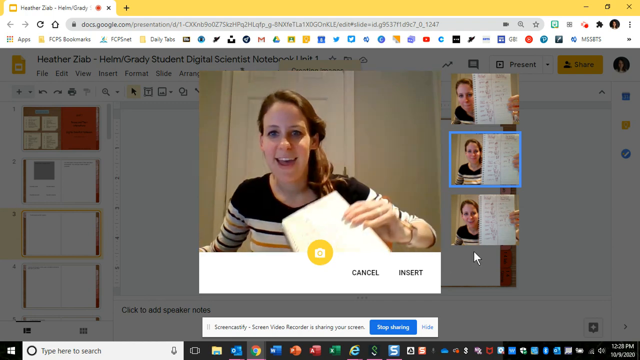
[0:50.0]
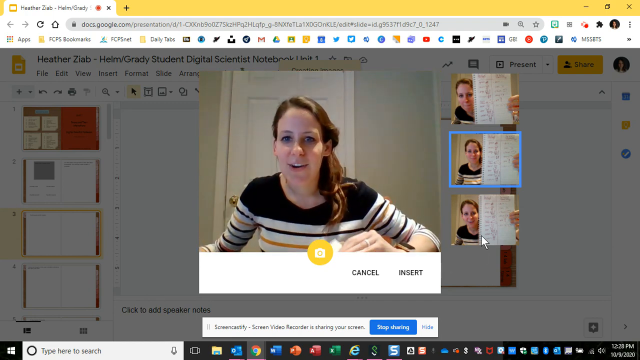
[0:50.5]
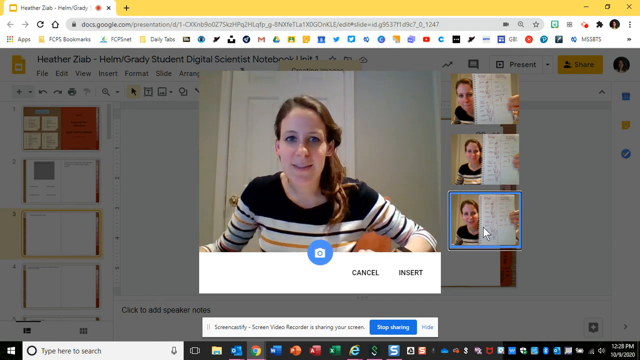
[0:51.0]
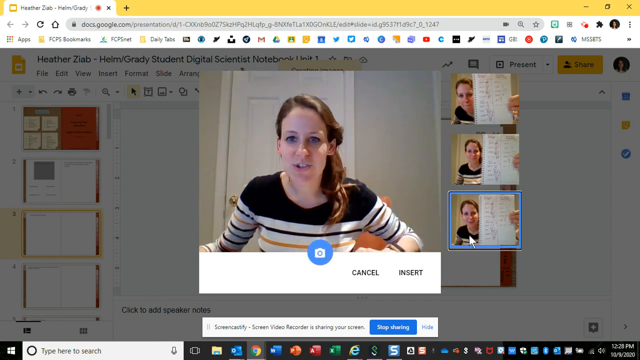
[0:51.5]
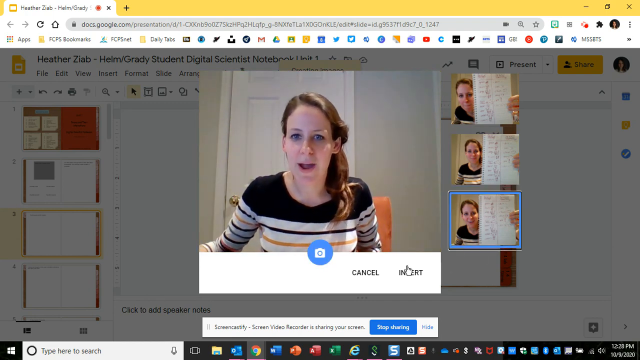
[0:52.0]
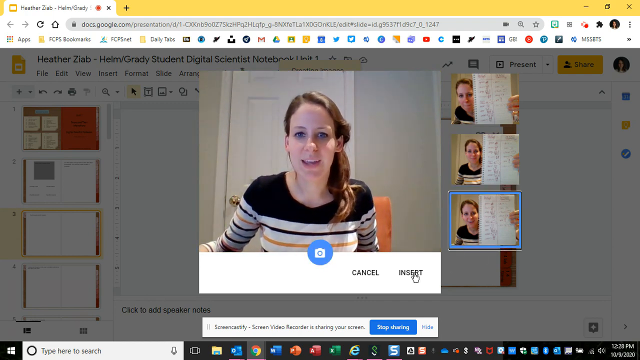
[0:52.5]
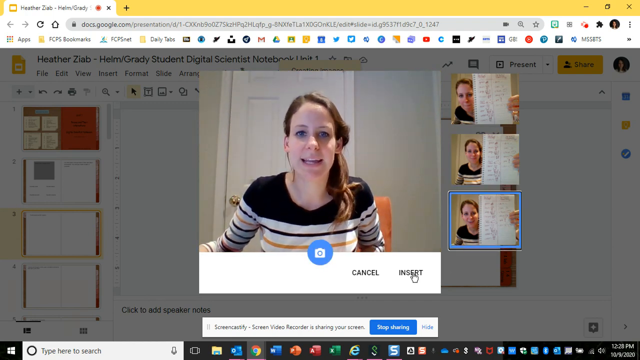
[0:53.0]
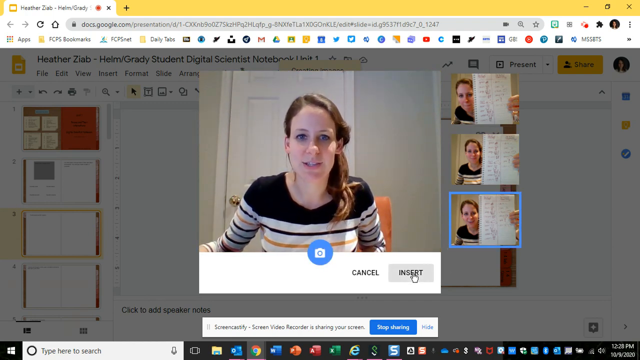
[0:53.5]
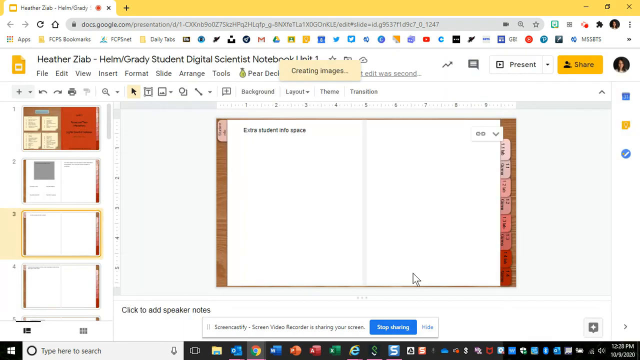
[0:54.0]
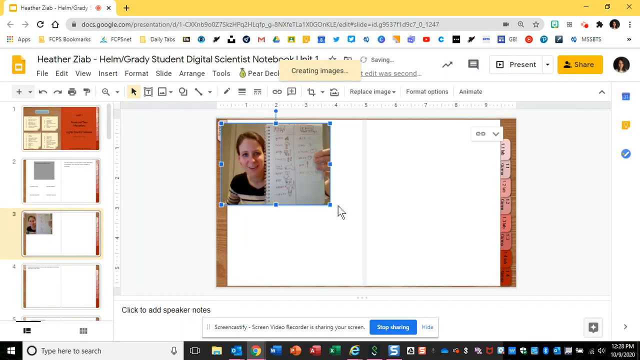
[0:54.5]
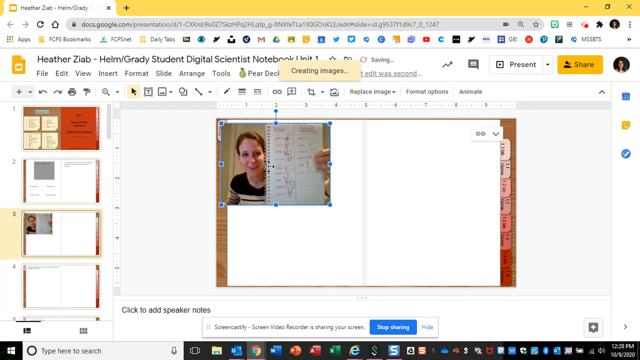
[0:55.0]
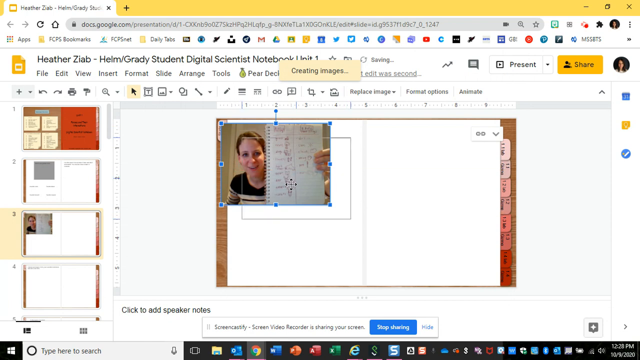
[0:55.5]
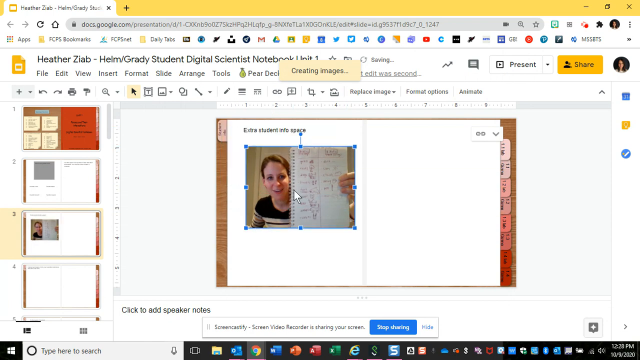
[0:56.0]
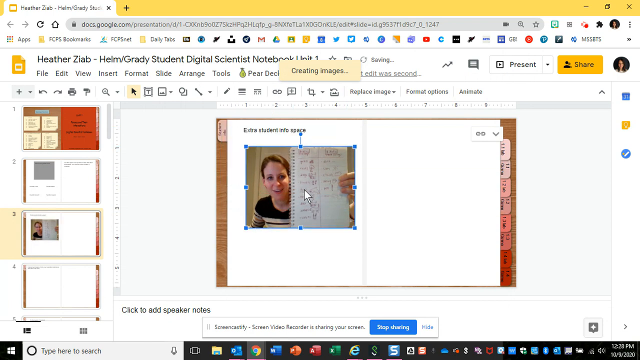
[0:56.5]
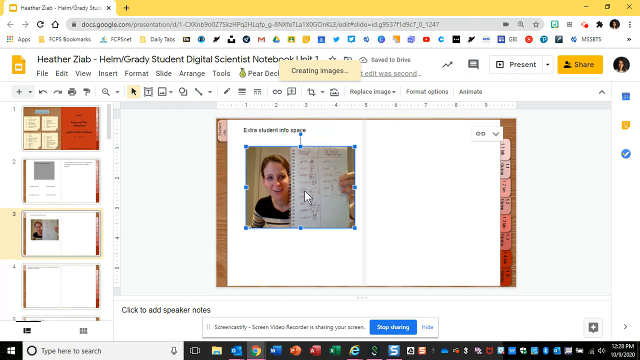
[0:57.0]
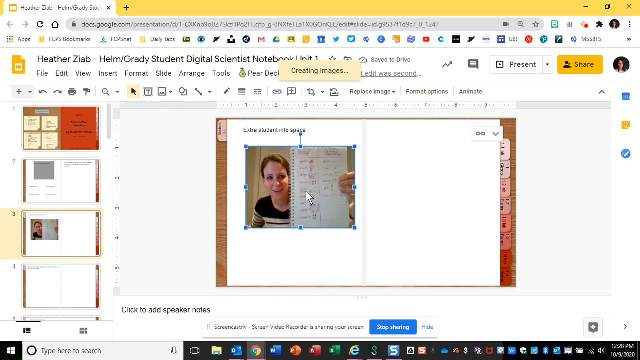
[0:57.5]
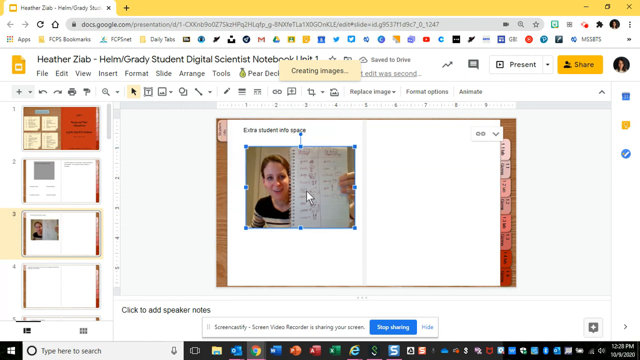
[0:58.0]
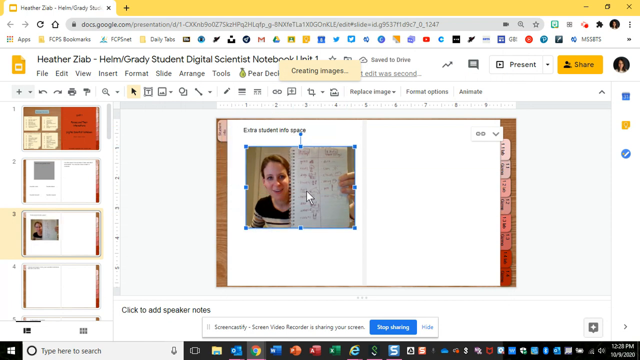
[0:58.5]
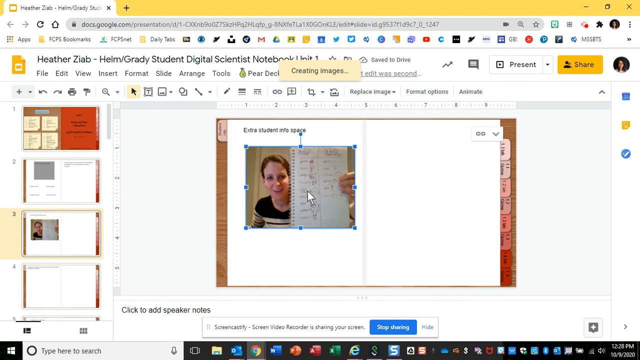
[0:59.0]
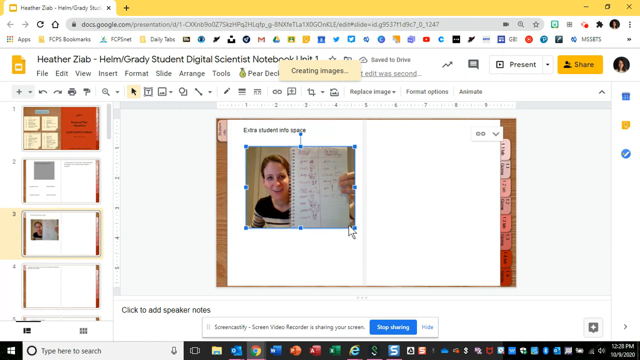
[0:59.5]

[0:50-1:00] After she takes the photograph, the camera button turns blue, and she clicks insert. The photo she took now appears in the main frame, and she moves it onto the first page under "extra student info space." She then adjusts its size, pulling it to make it larger. She has taken a photograph with a laptop camera and placed it in her digital notebook.